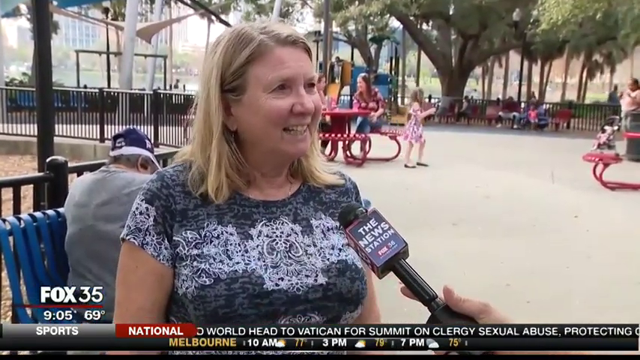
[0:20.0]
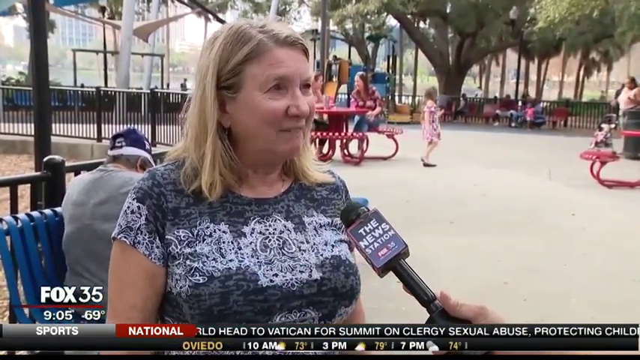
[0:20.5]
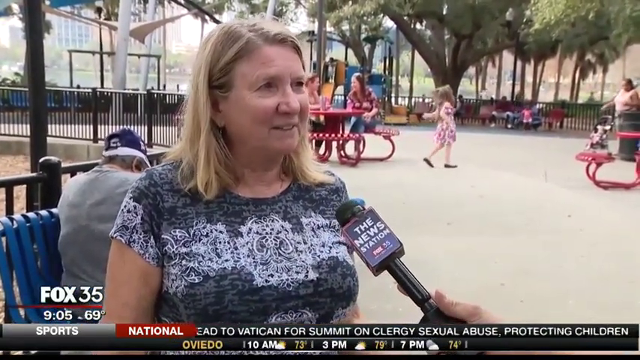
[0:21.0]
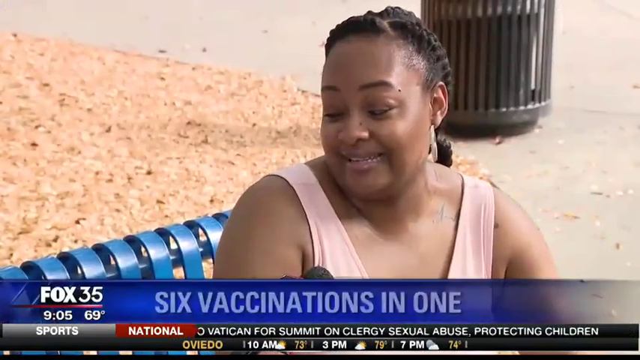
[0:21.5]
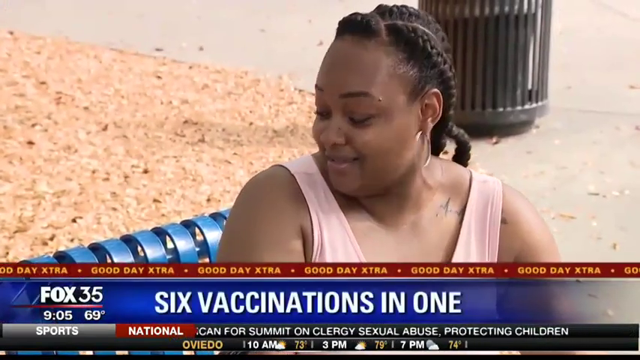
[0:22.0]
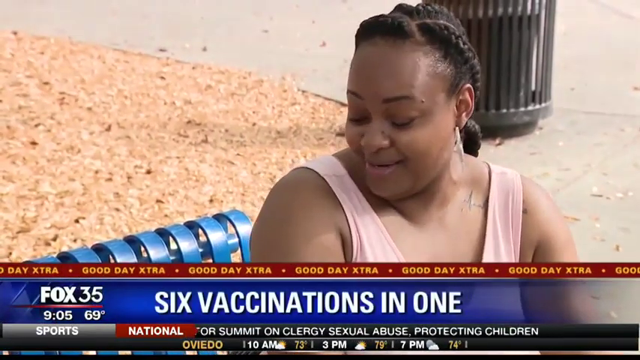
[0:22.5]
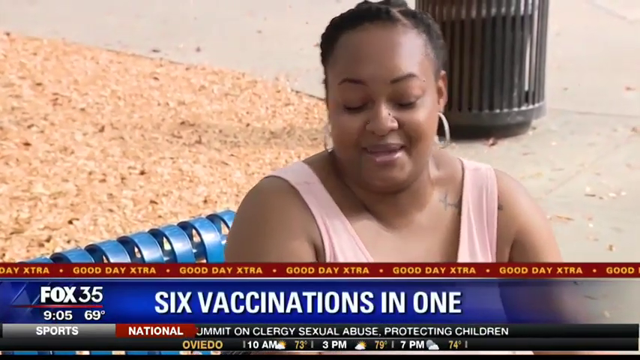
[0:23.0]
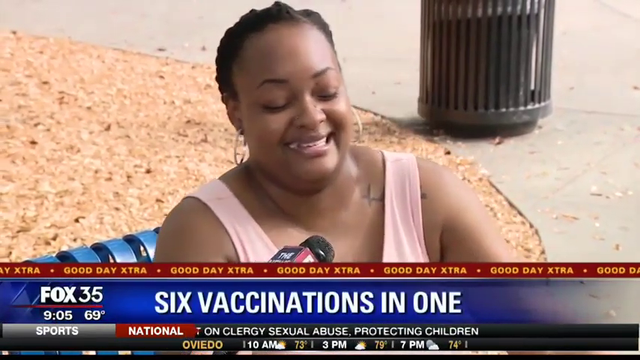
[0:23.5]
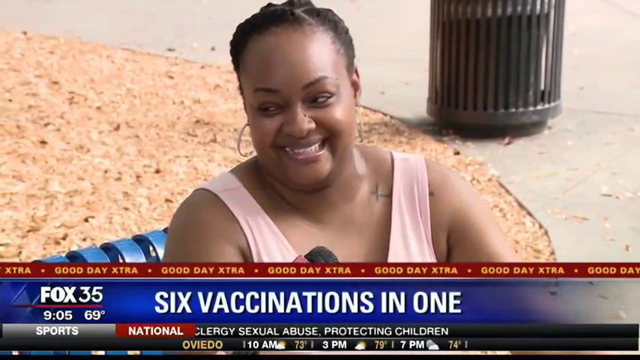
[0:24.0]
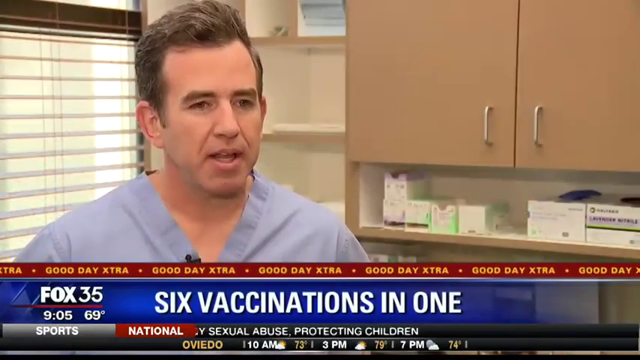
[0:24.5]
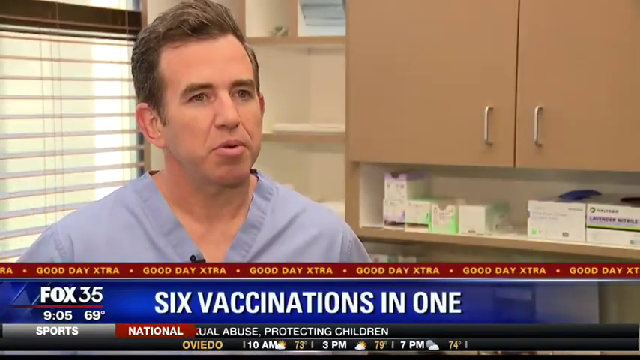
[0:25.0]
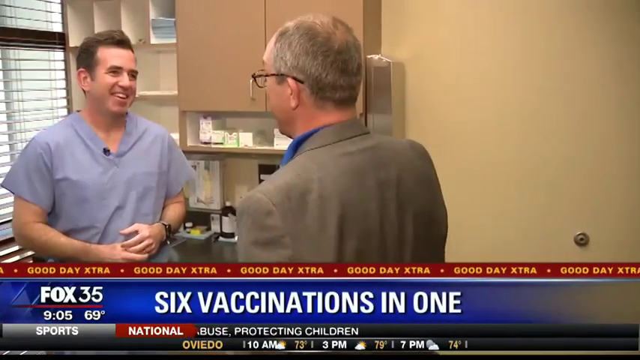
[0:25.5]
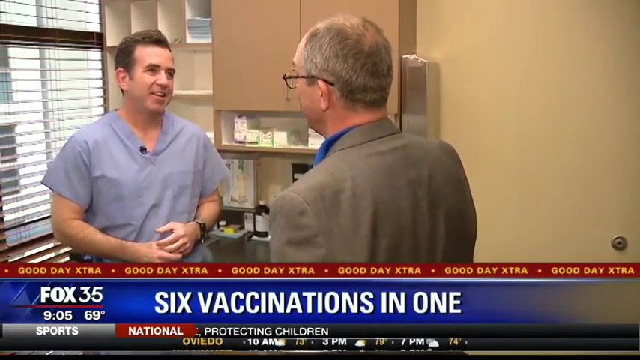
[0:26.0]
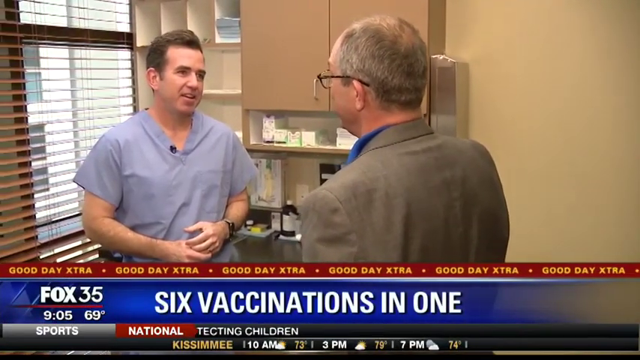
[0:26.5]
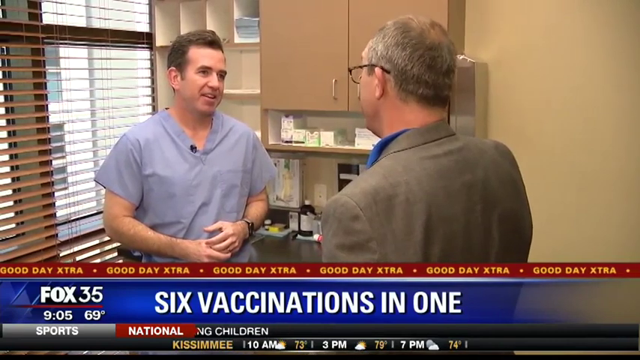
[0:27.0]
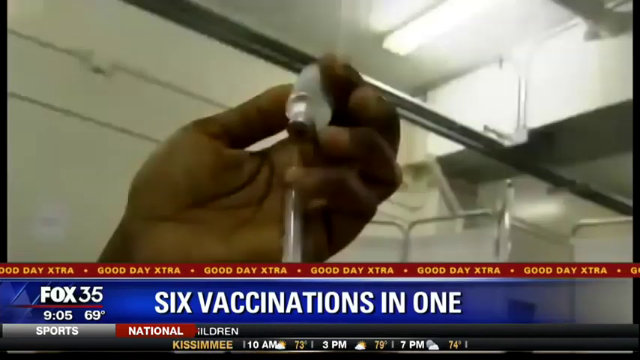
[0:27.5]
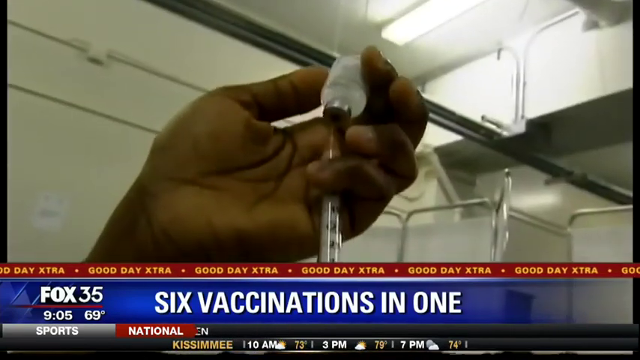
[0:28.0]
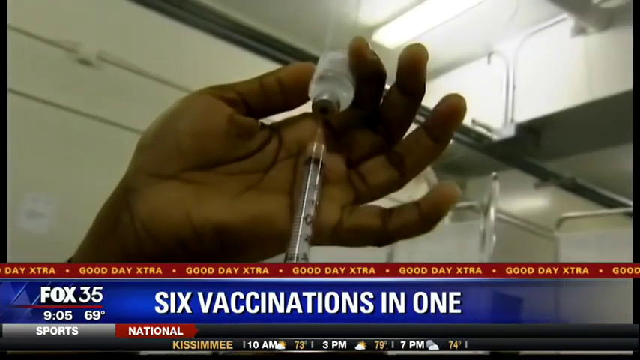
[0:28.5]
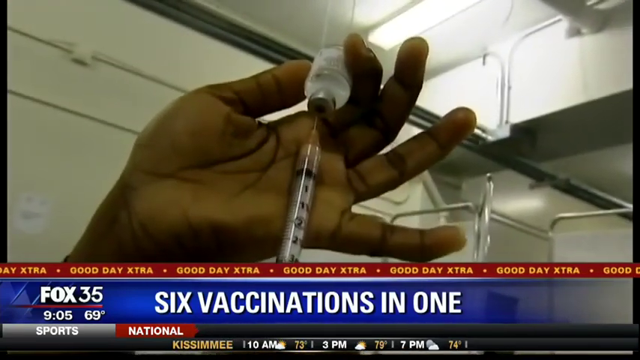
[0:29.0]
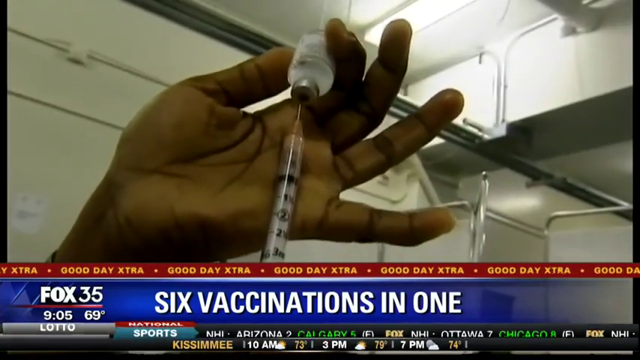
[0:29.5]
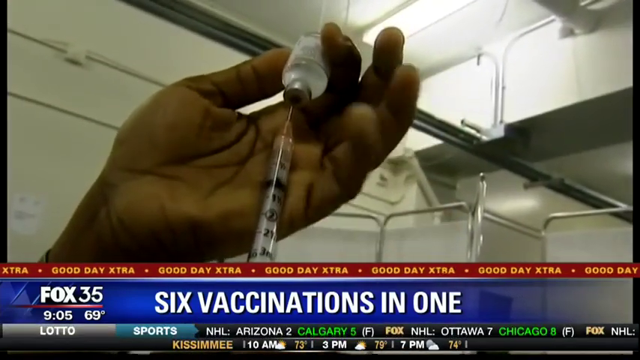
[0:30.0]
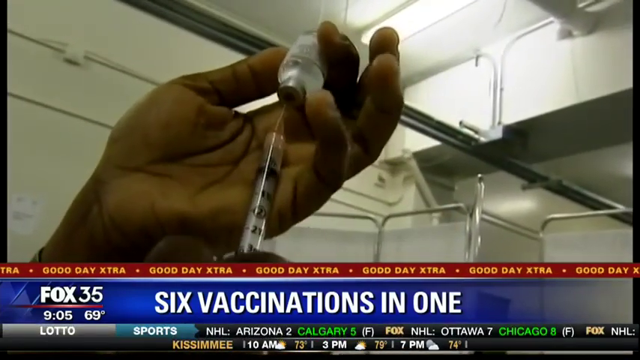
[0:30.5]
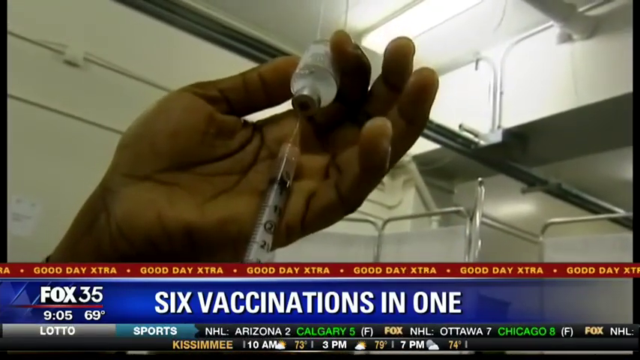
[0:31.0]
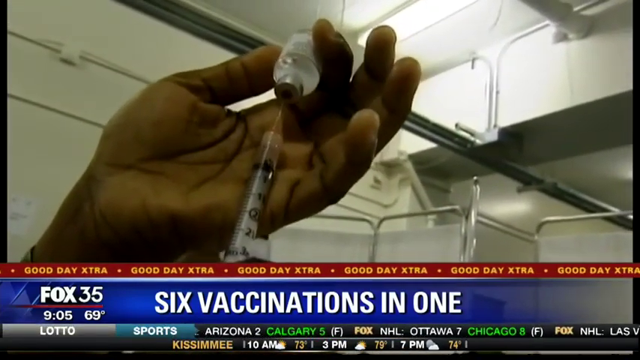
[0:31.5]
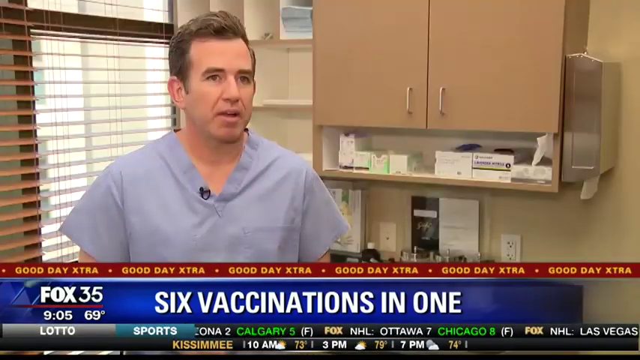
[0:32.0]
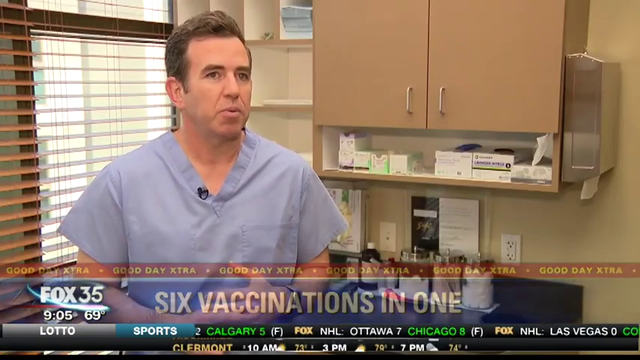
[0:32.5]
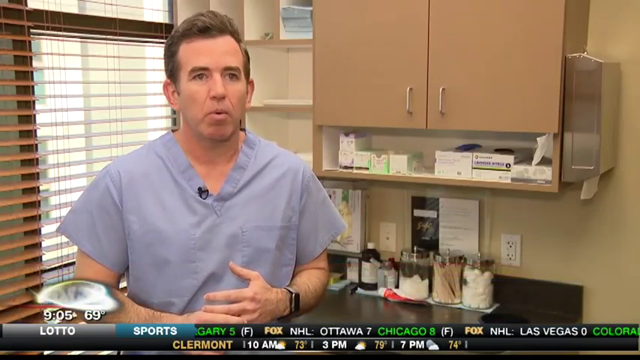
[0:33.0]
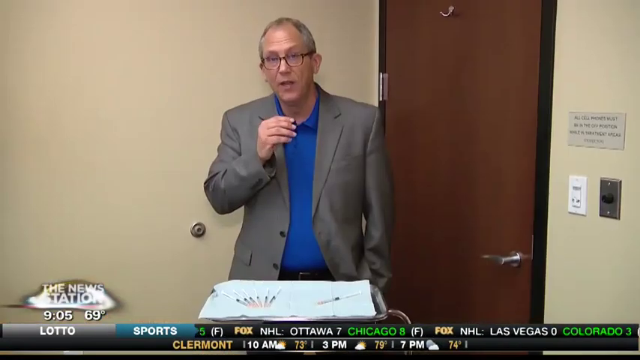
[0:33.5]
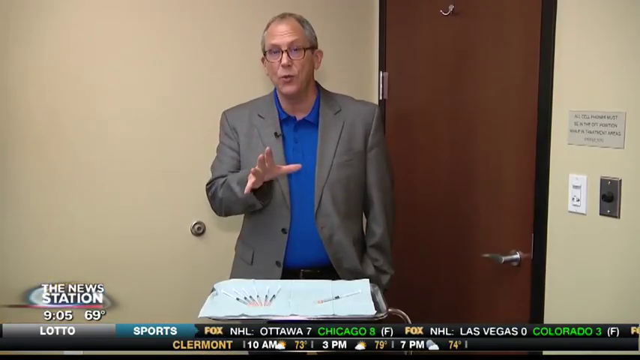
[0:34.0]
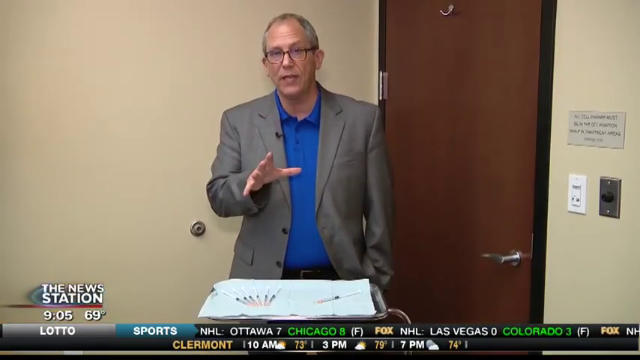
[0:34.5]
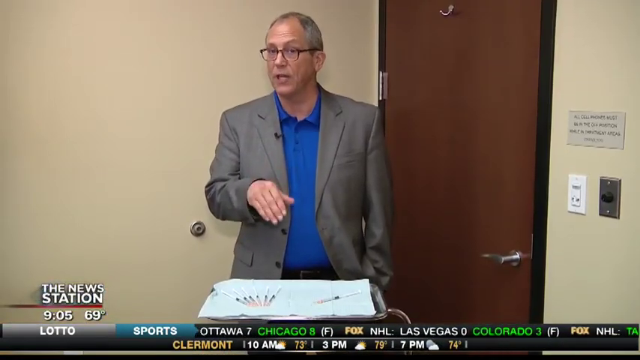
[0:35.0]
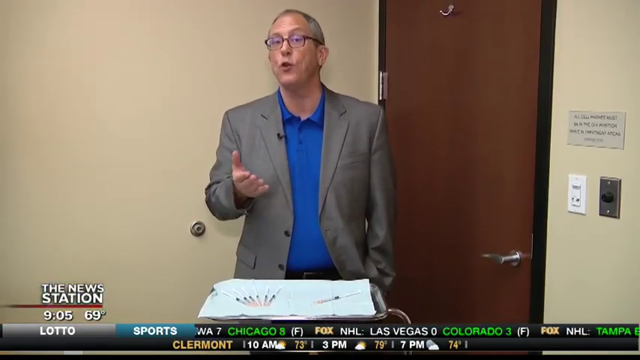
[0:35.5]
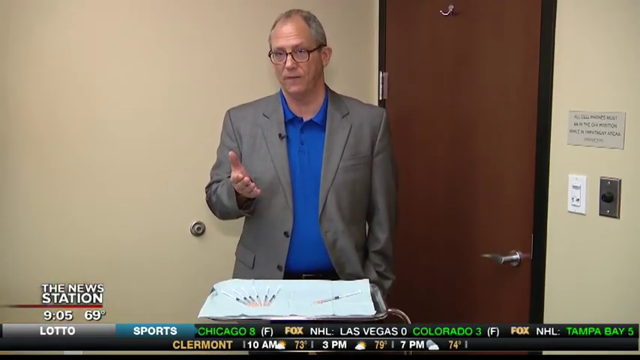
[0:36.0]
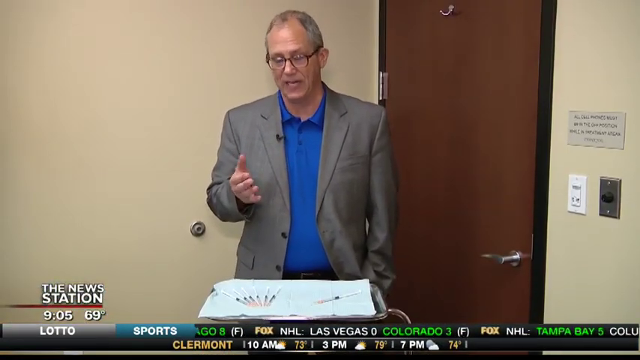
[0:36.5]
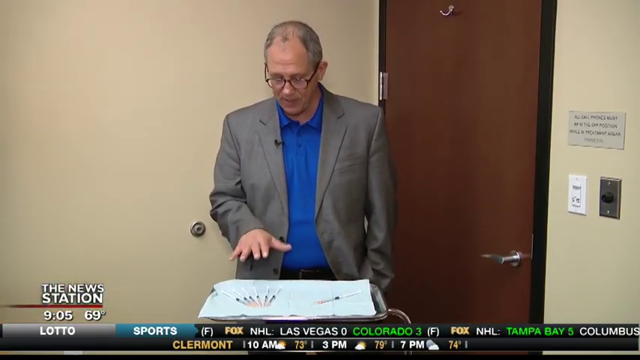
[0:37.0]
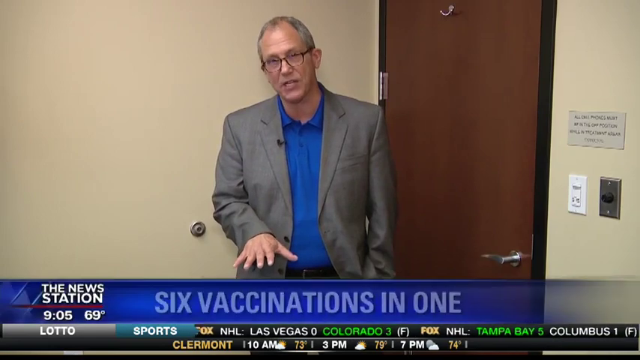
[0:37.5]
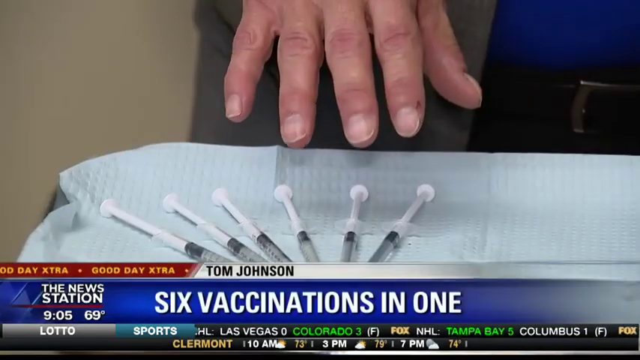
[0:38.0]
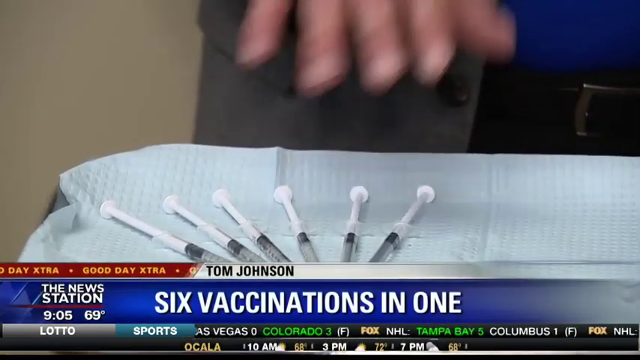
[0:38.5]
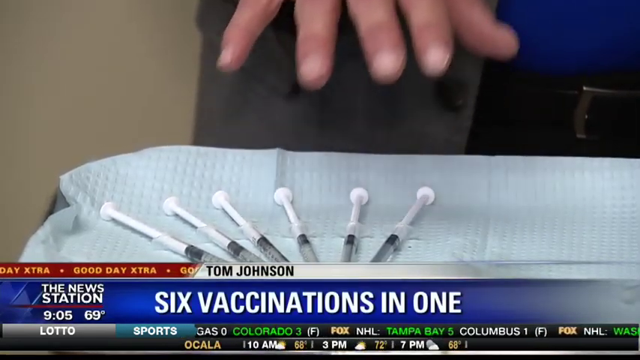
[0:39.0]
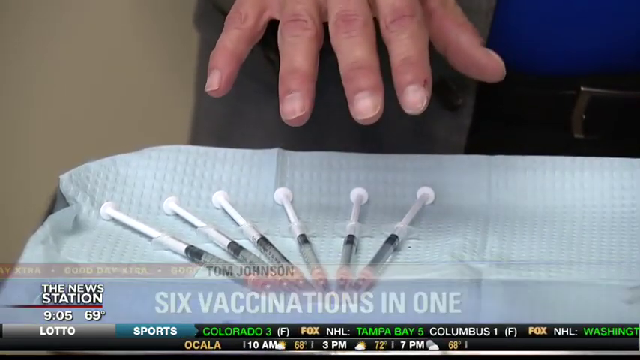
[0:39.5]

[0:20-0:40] The older white woman speaks into a microphone that says the news station, "Fox 35". The shot switches to the African American woman sitting on the park bench, who wears a pink tank top. Then a doctor appears in an exam room next to a cupboard with medical supplies. He wears a blue v-neck scrub shirt and has dark brown wavy hair combed to his left. A ticker at the bottom of the screen says "six vaccinations in one". The doctor is shown speaking to a gentleman in a tan corduroy suit jacket. The scene switches to an African American hand extracting medicine with a needle and syringe from a bottle turned upside down, then cuts back to the doctor talking. It then cuts to the gentleman wearing the gray suit, who speaks behind filled vaccination needles.